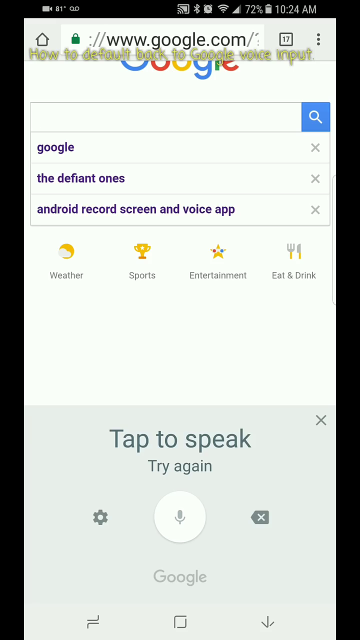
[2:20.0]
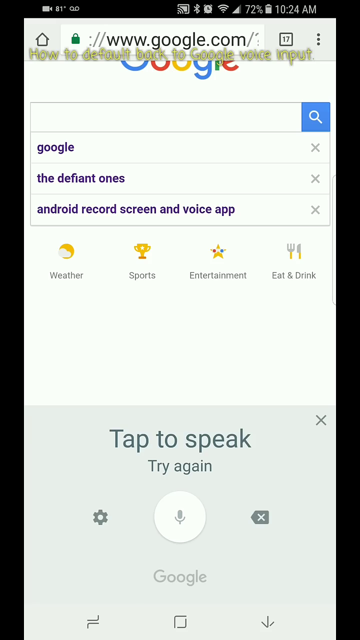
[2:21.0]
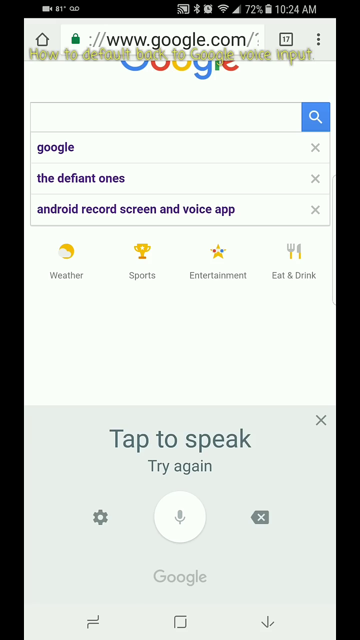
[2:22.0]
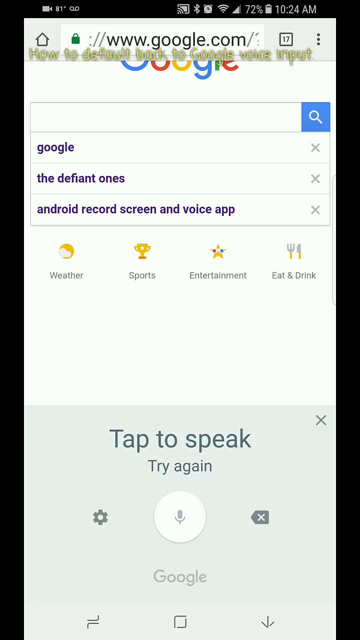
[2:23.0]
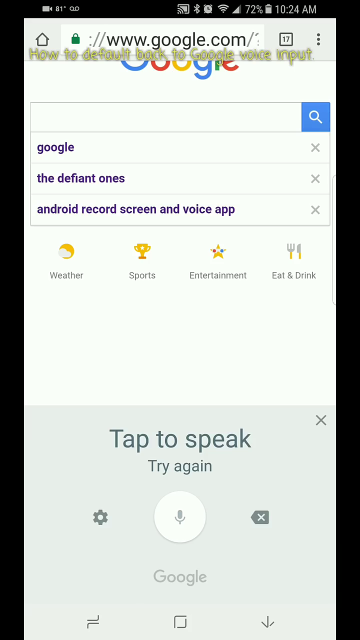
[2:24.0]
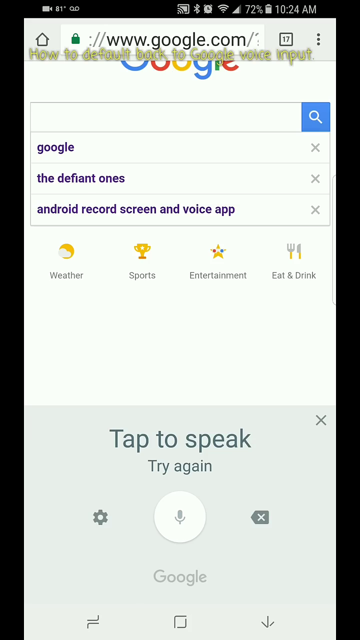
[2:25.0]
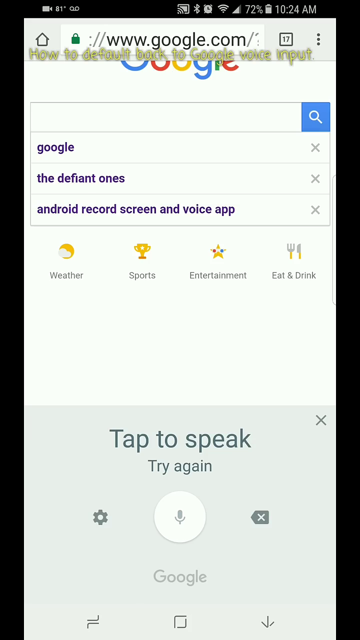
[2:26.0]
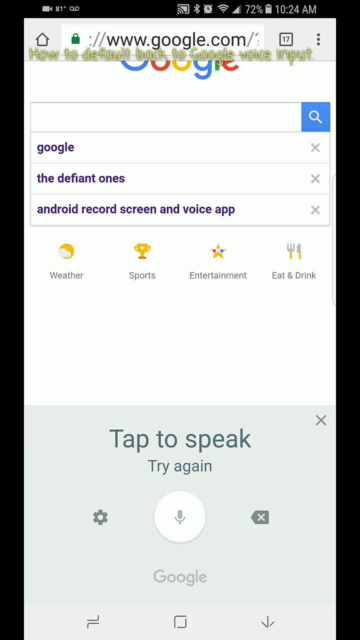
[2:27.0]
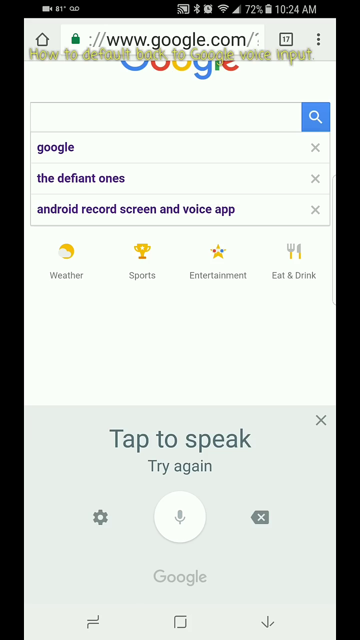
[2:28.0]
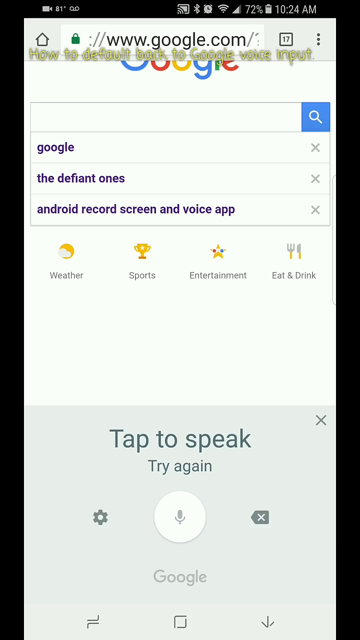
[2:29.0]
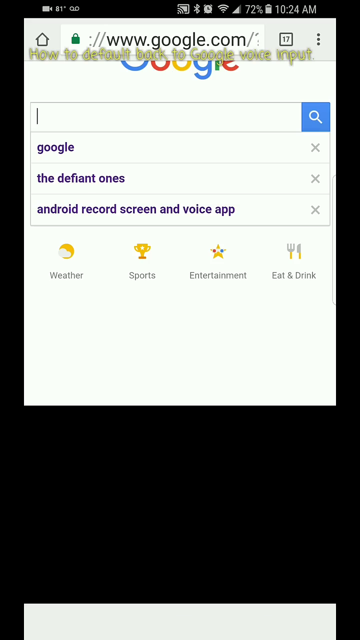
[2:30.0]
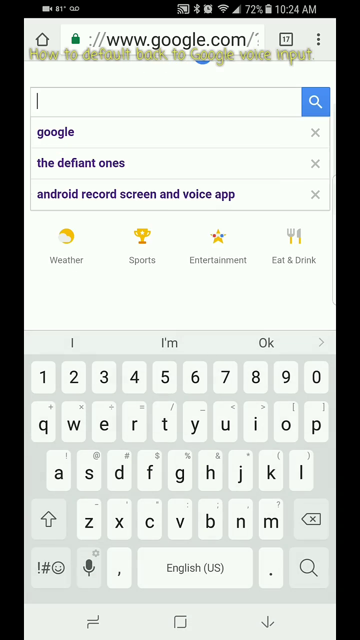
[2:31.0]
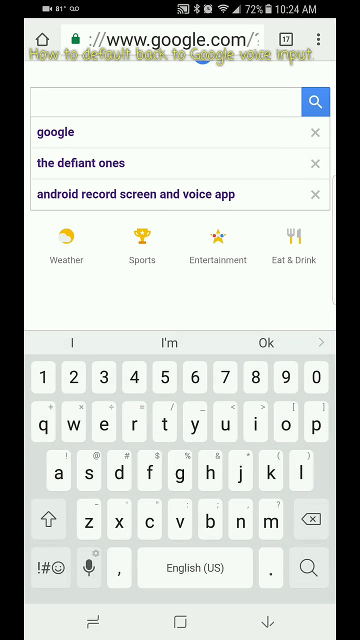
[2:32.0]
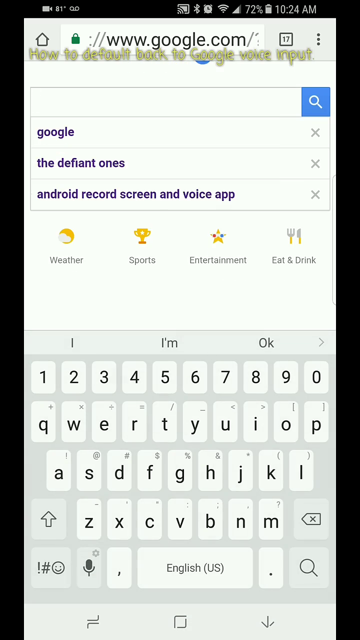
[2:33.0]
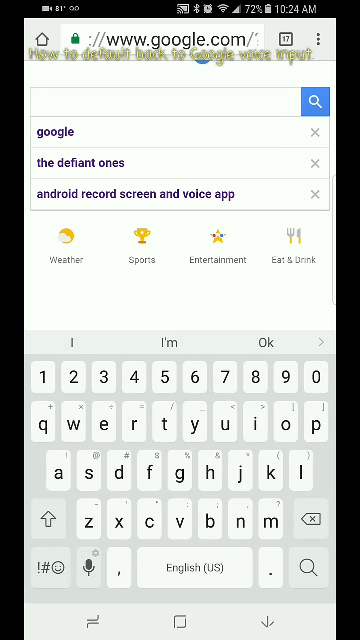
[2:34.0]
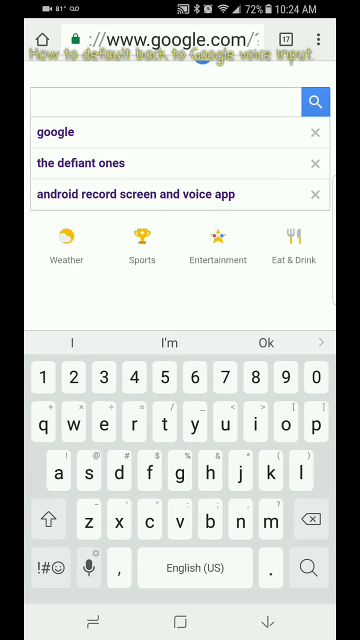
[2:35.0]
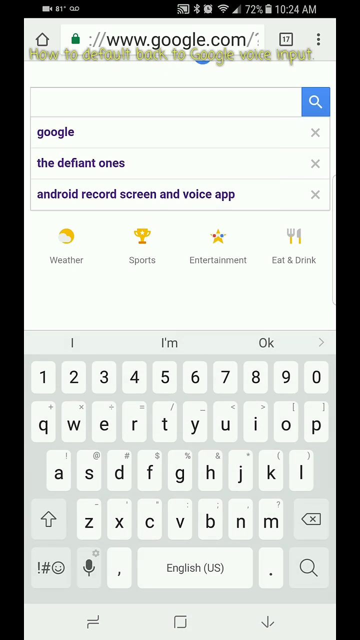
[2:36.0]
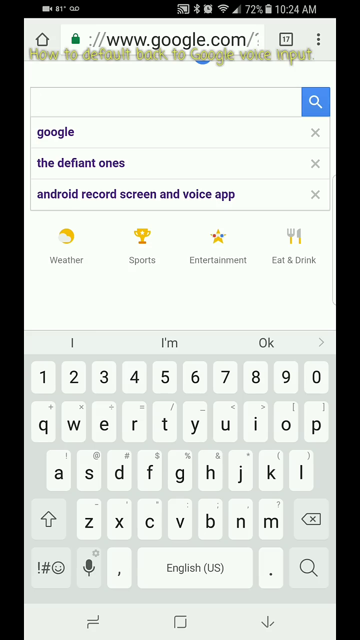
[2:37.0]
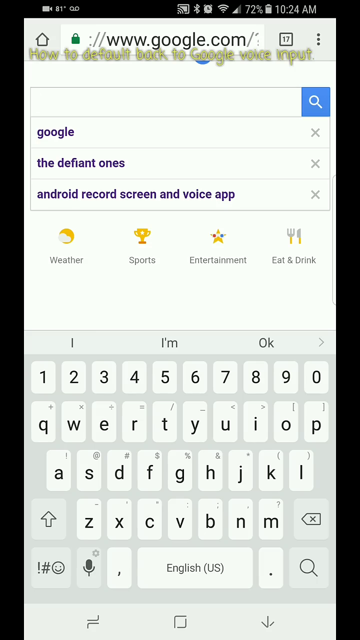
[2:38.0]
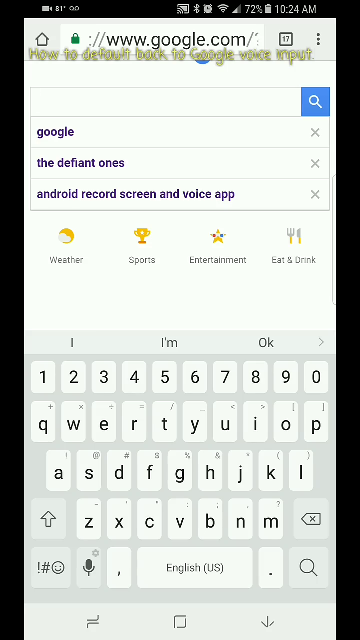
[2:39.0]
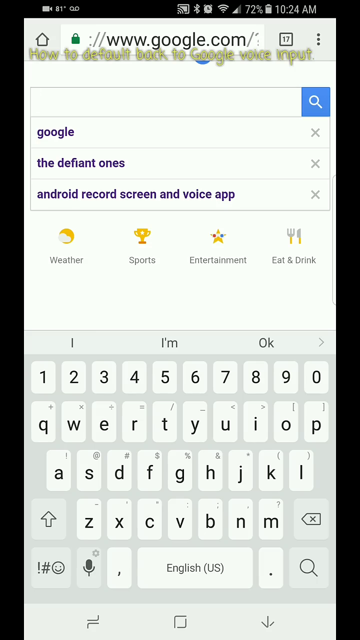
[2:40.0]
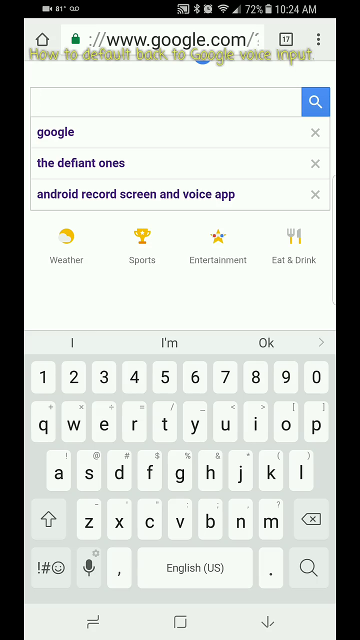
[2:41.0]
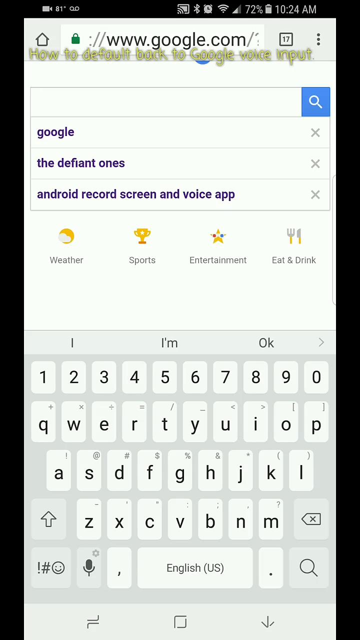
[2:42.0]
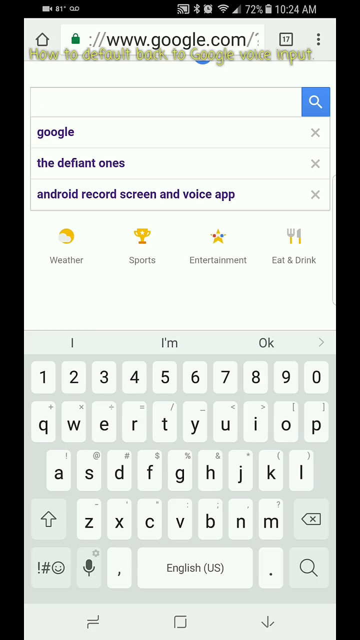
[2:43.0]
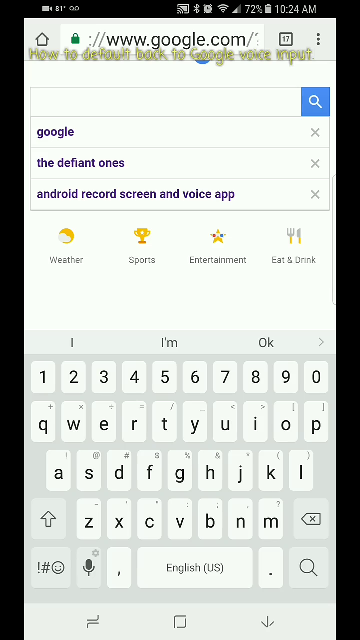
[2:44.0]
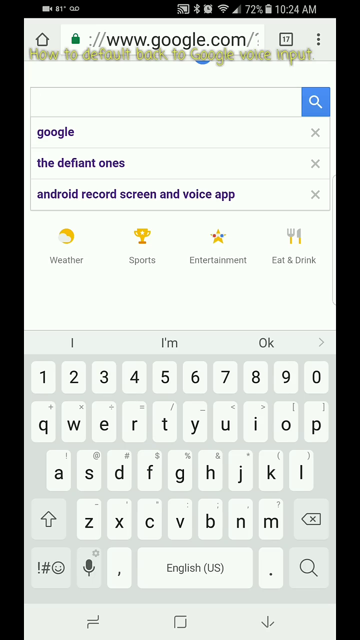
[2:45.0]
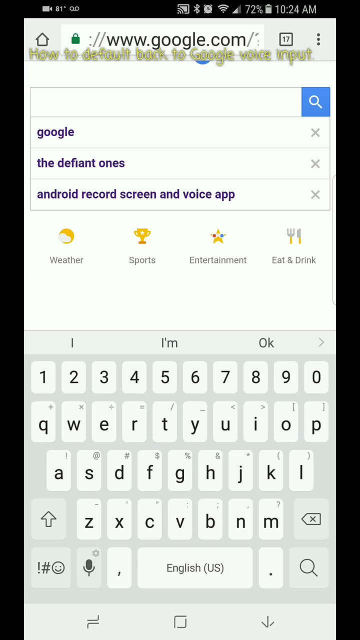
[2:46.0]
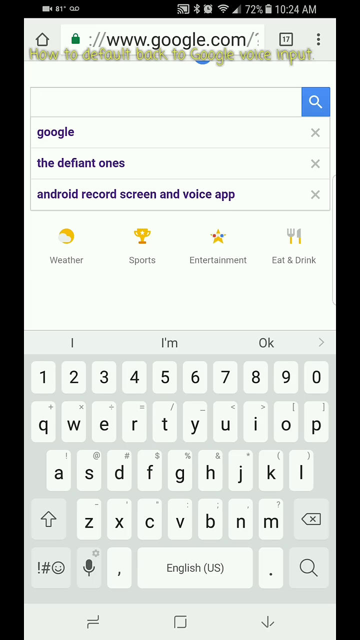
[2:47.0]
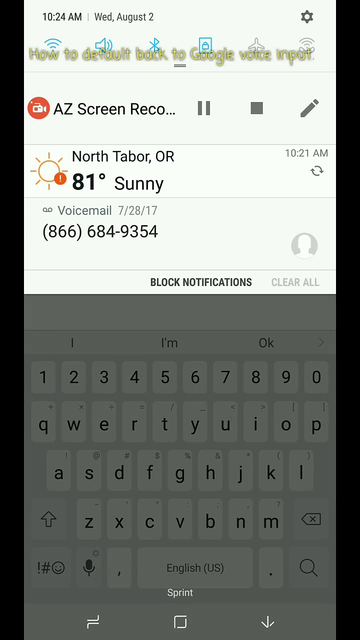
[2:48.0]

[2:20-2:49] The Google search field shows previously typed entries including Google, the defiant ones, Android record, record screen, and voice app. Recorder controls at the top allow pausing. At the bottom, "tap to speak" appears in larger text with "try again" about half the size beneath it, along with a white circle containing a gray speaker-like icon, a gear on the left, and an upward arrow with an X on the right. The screen flickers repeatedly. Below the google.com URL address, the multicolored Google logo is partly blocked by the how-to text, which stays on screen. The keyboard then replaces the tap-to-speak area; the user may be starting to type but has not typed anything, and suggestions "I", "I'm", and "okay" appear at the top of the keyboard with a right arrow for more options. The user then clicks something and the easy screen record app appears, apparently recording the screen.